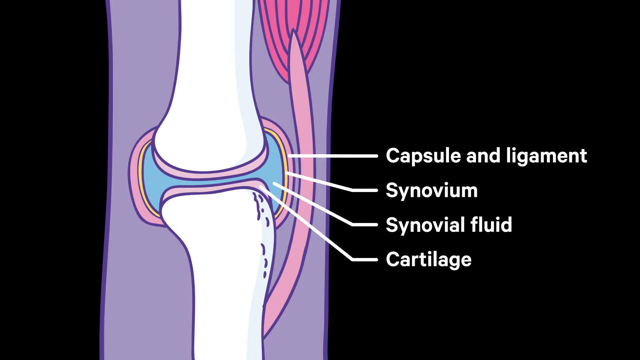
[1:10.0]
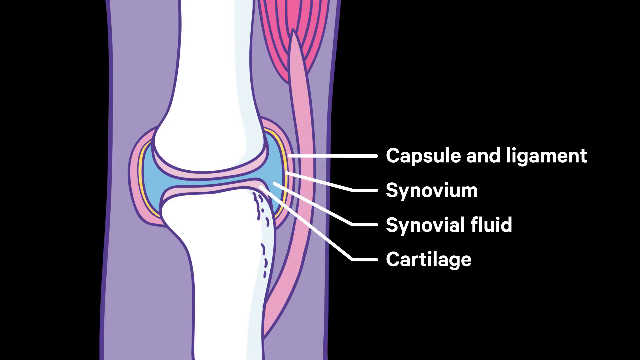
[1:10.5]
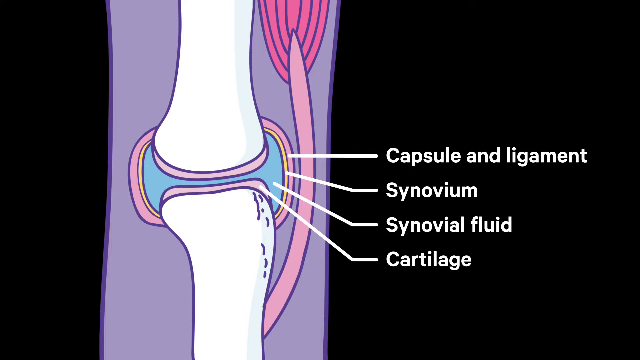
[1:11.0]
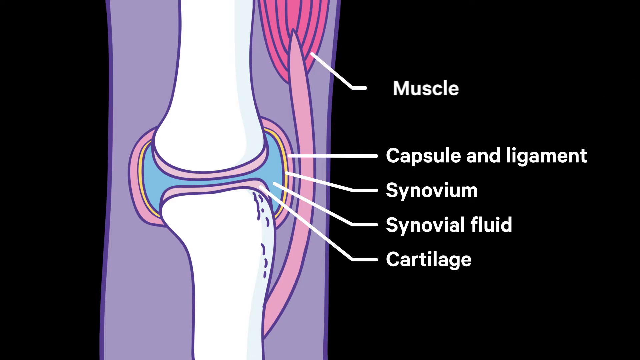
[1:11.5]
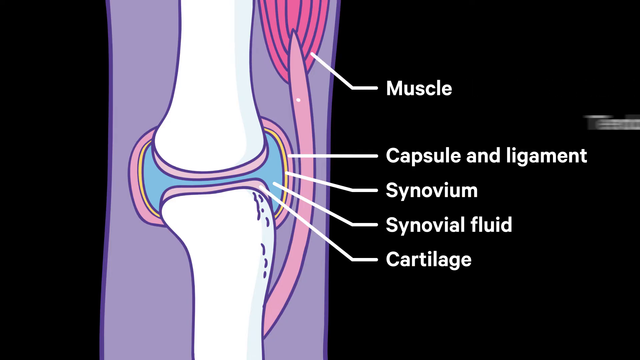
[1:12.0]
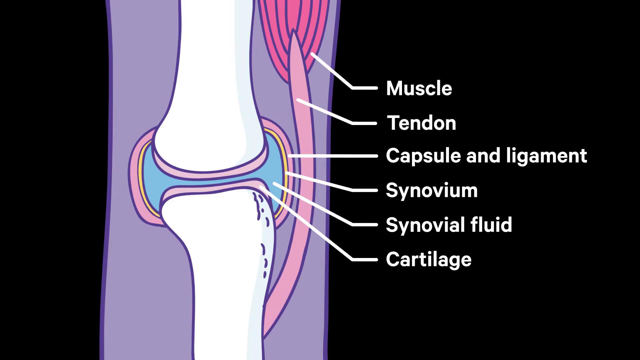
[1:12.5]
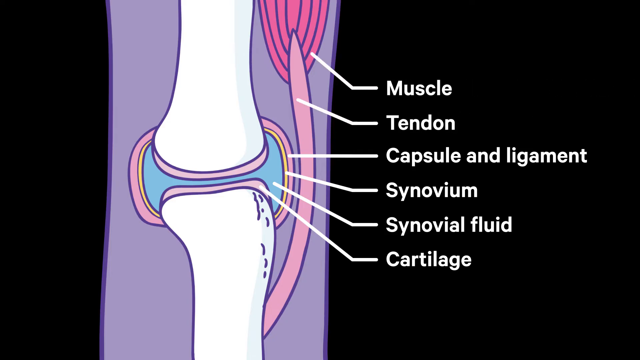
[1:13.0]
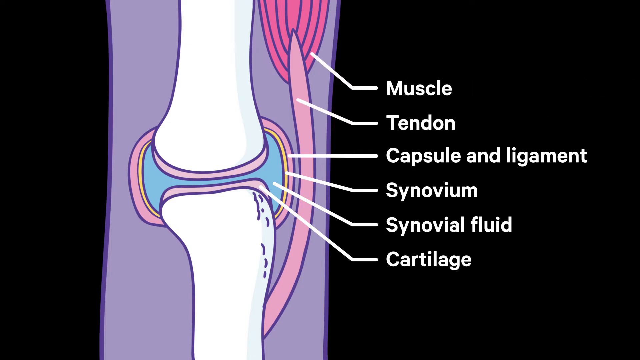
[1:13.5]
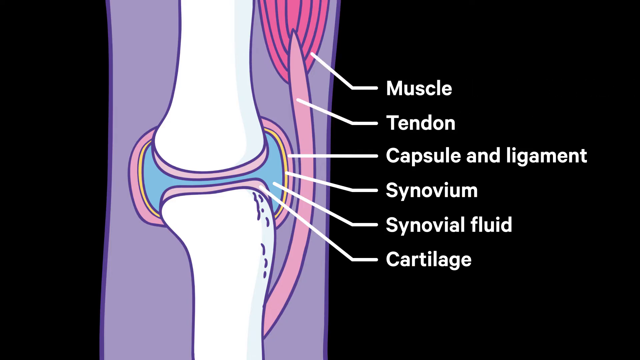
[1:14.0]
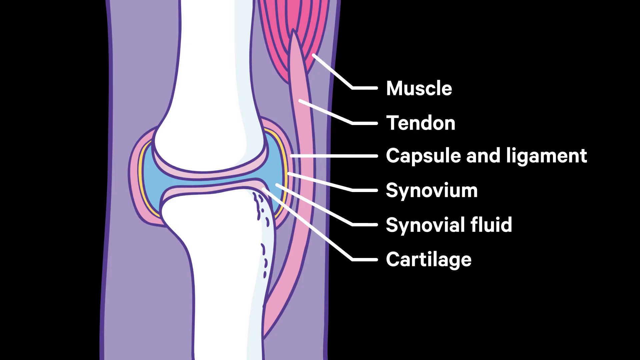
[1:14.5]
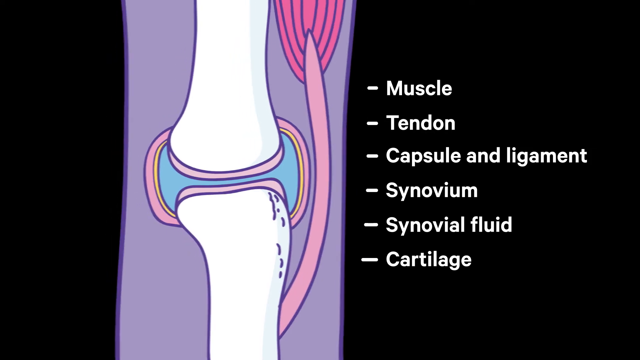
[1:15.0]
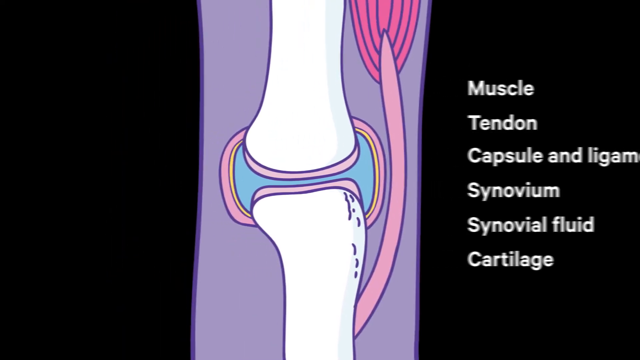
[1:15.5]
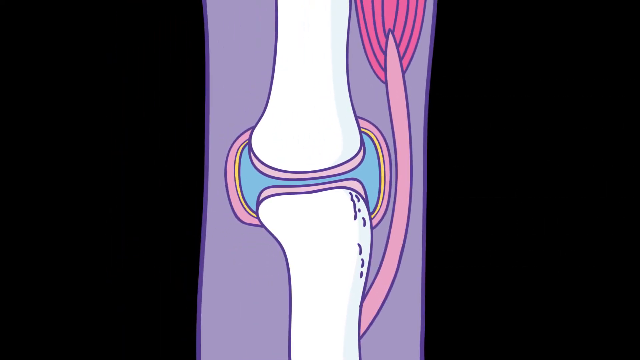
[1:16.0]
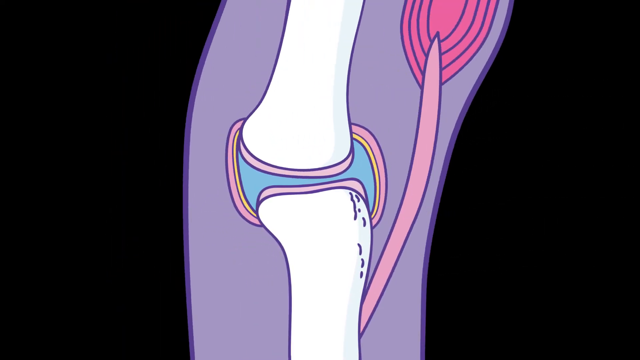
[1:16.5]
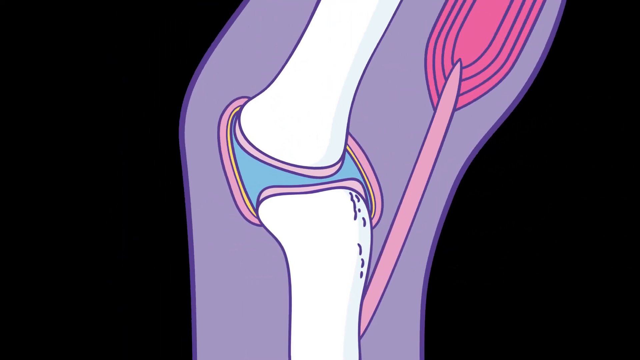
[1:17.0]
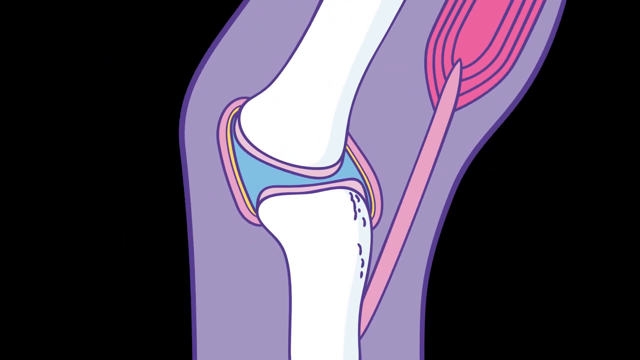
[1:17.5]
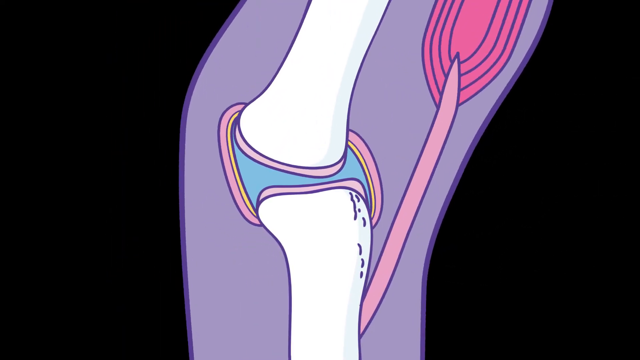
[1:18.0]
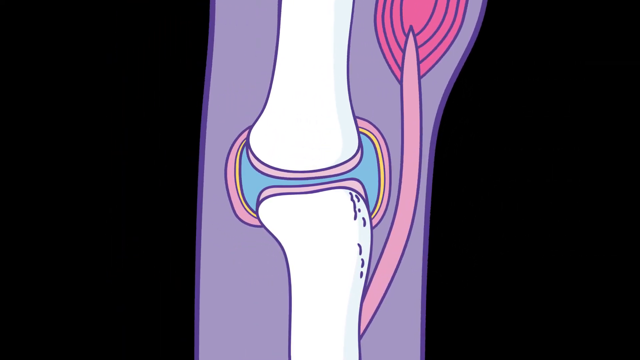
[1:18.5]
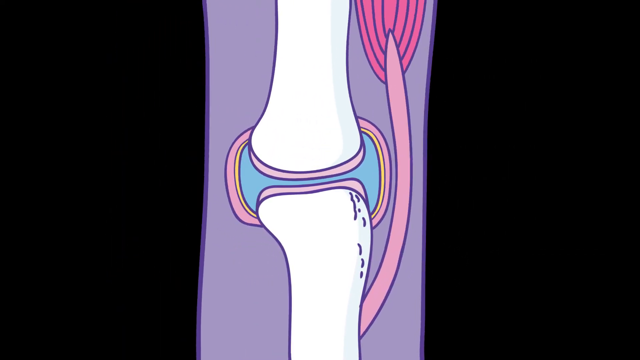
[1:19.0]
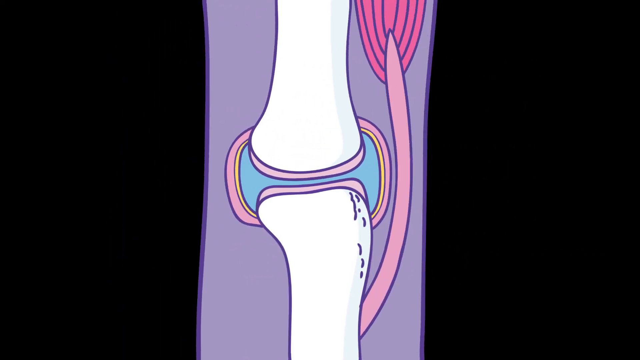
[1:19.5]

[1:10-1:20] The knee joint animation continues against a black background. The fluid is blue, the capsule and ligament are a pinkish-peach color, the cartilage is peach, and the synovium is yellow. Muscle appears as a reddish color toward the top of the animation. The knee is bent straight. The tendon is also peach-colored and looks like a snake.